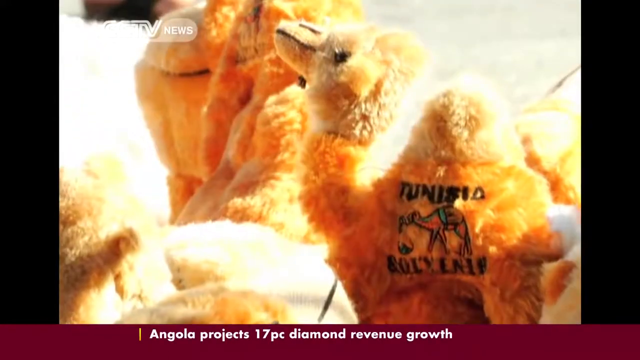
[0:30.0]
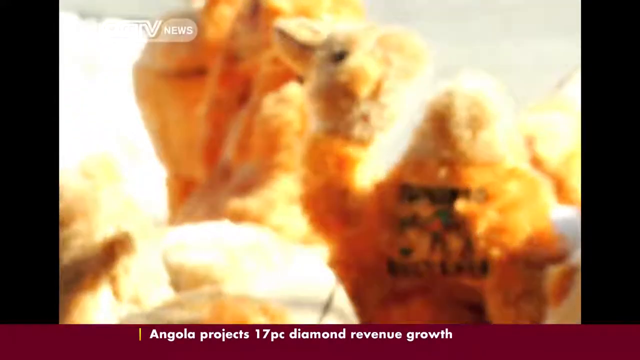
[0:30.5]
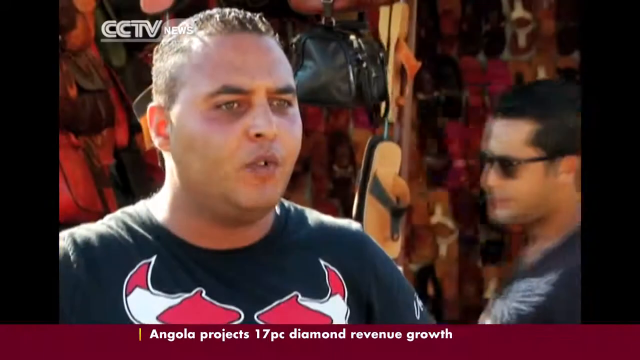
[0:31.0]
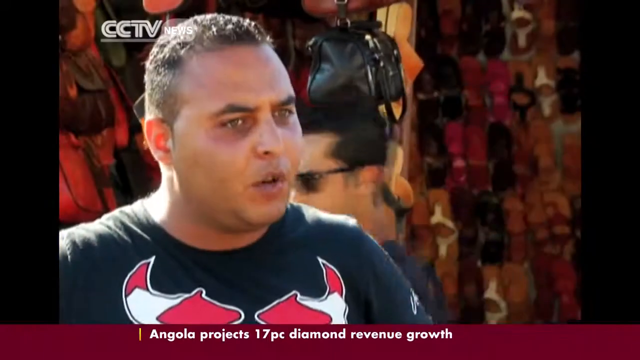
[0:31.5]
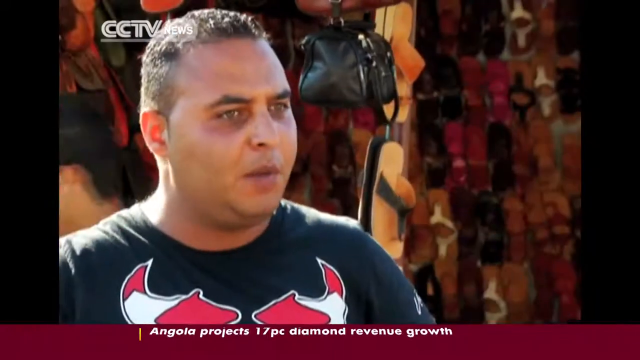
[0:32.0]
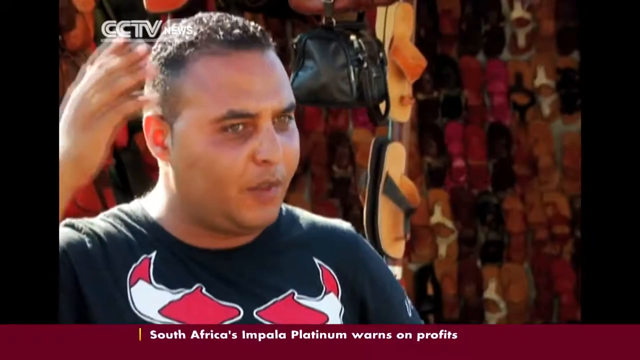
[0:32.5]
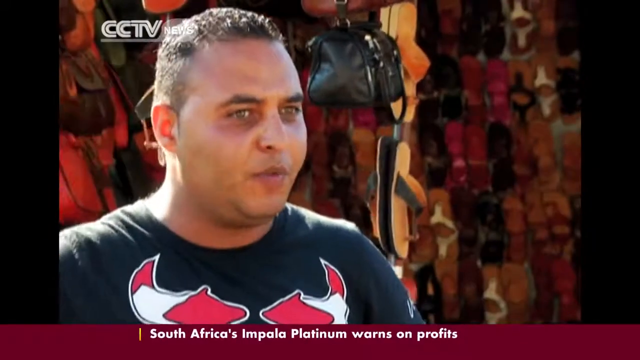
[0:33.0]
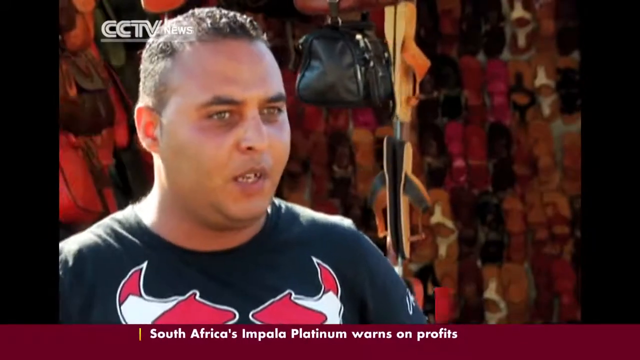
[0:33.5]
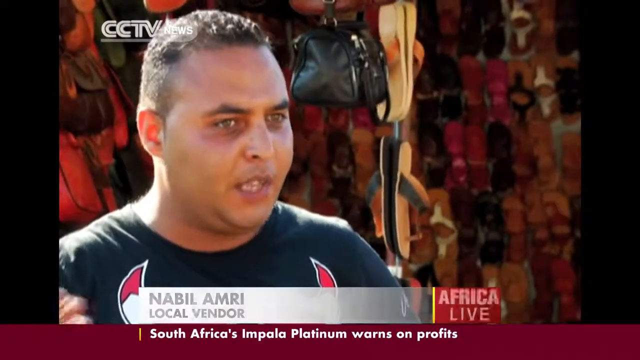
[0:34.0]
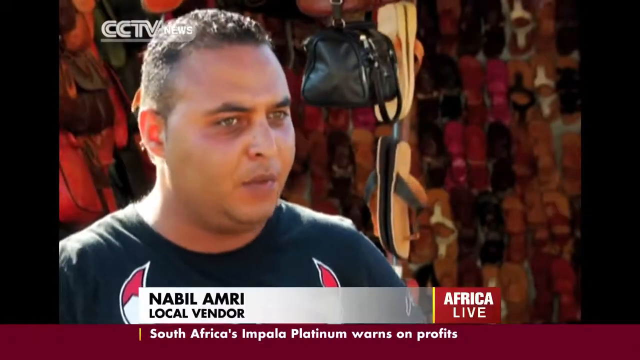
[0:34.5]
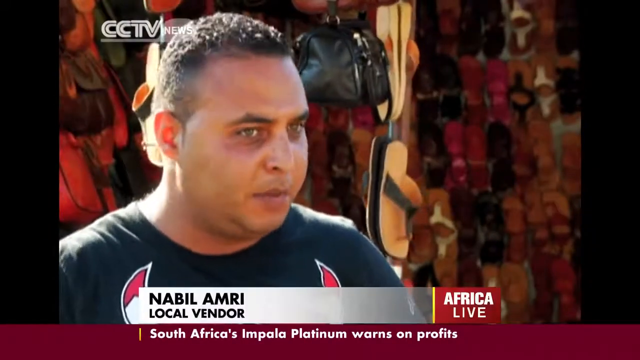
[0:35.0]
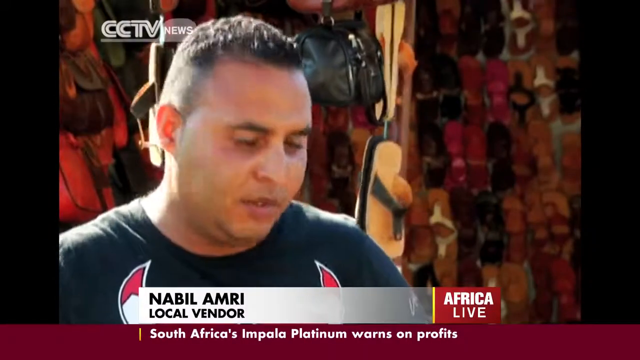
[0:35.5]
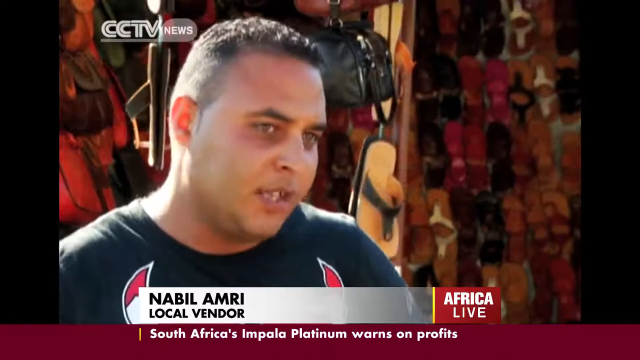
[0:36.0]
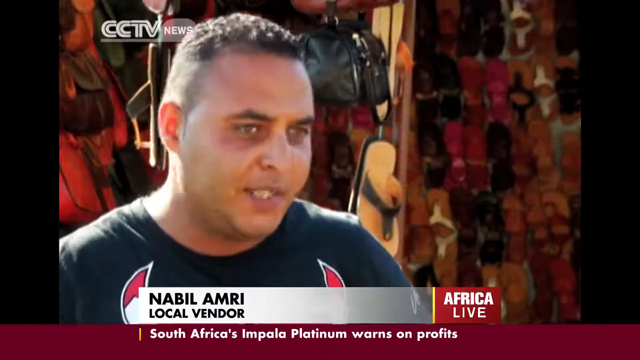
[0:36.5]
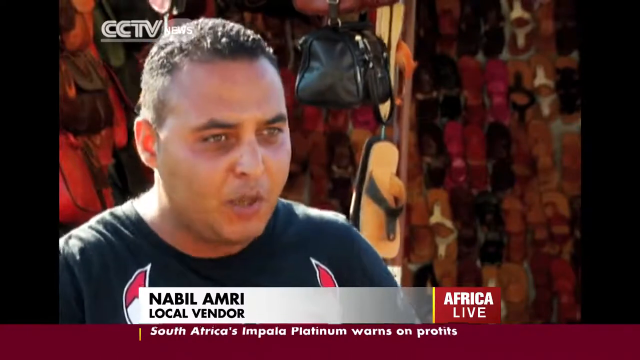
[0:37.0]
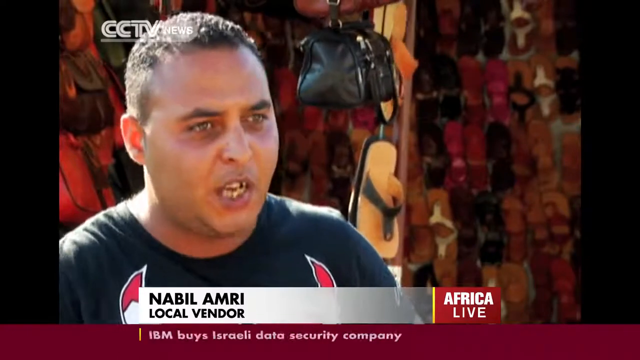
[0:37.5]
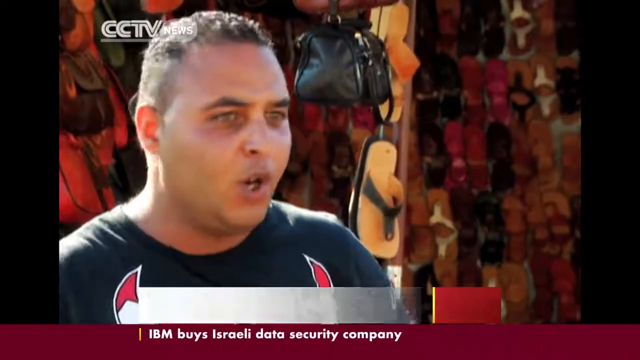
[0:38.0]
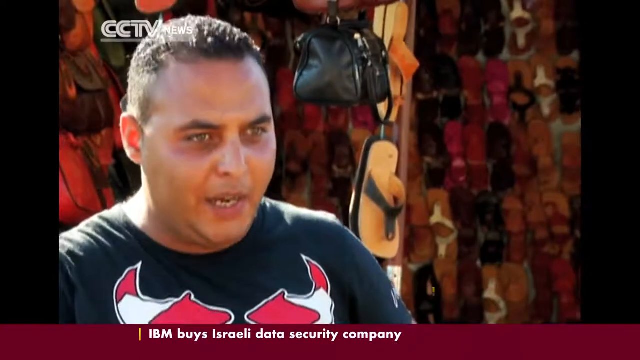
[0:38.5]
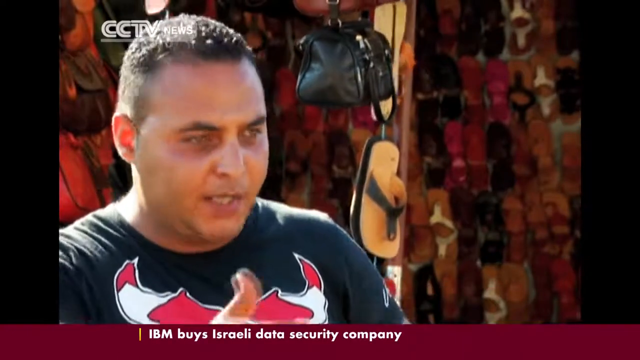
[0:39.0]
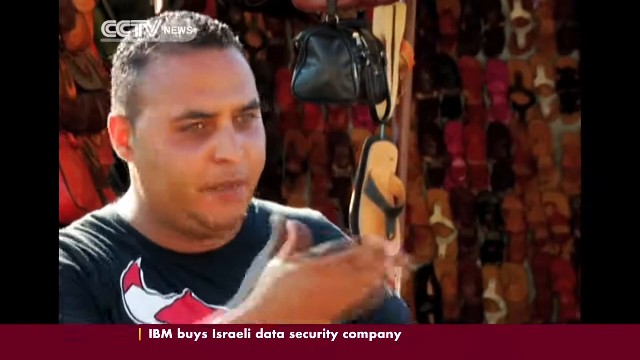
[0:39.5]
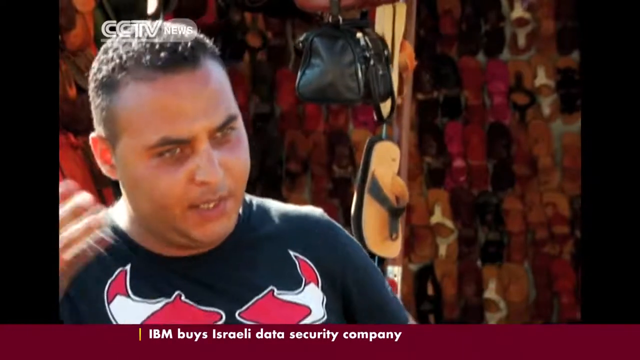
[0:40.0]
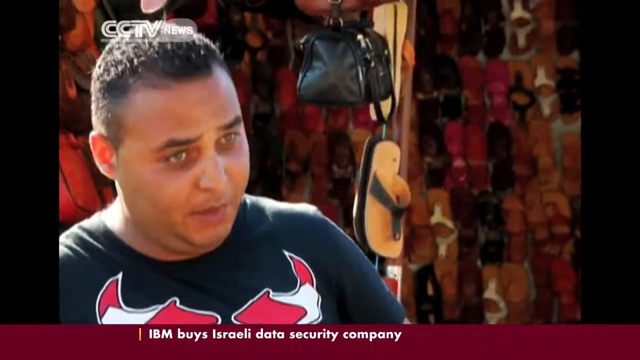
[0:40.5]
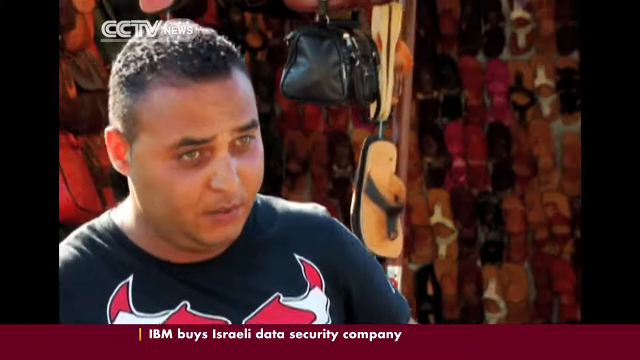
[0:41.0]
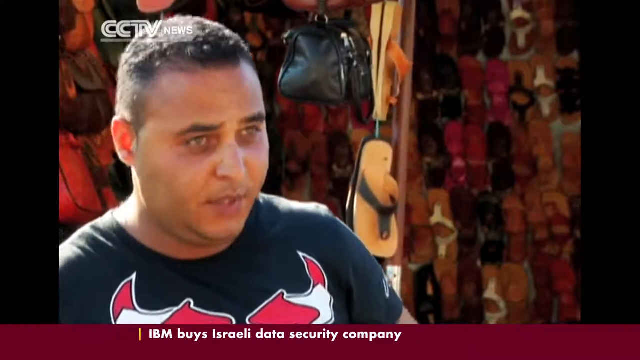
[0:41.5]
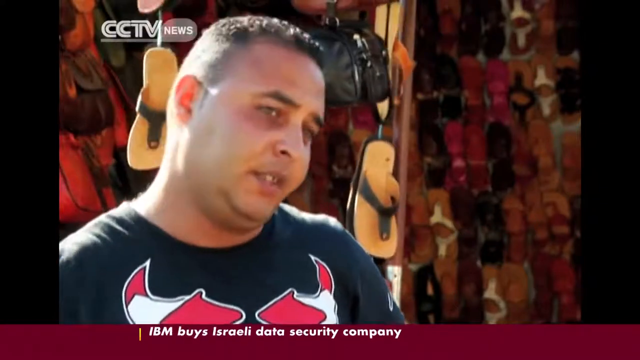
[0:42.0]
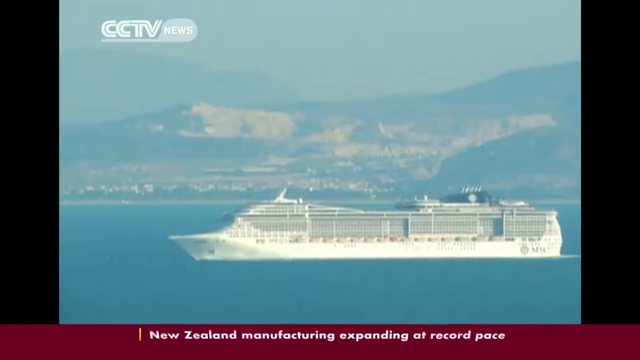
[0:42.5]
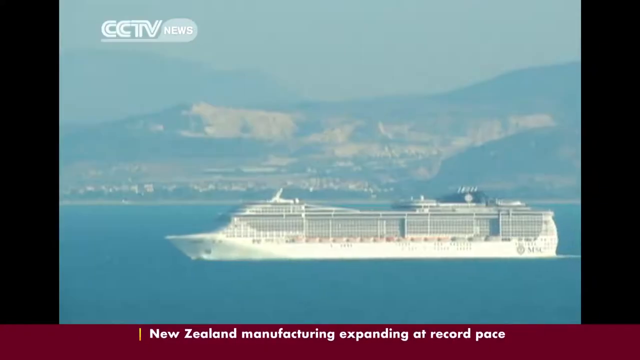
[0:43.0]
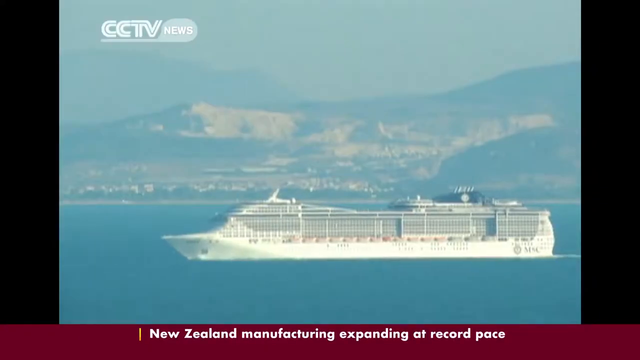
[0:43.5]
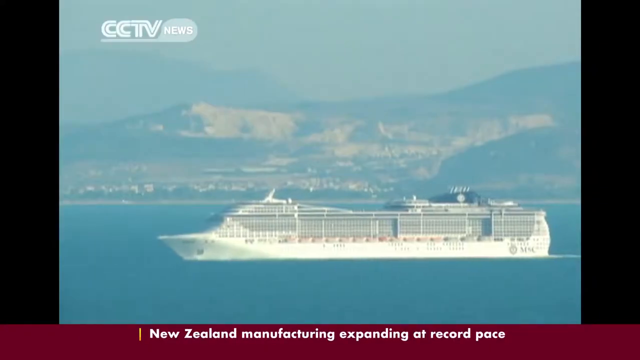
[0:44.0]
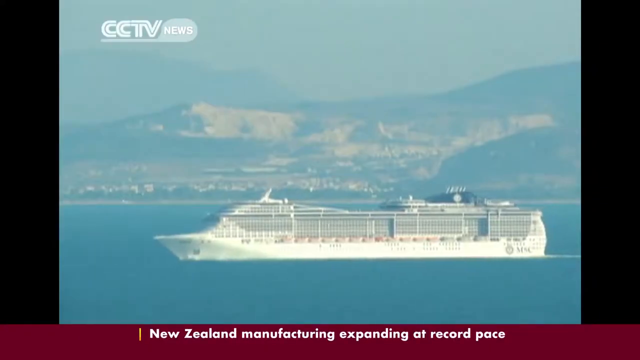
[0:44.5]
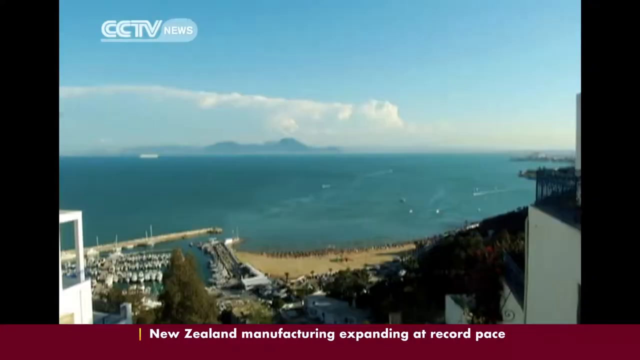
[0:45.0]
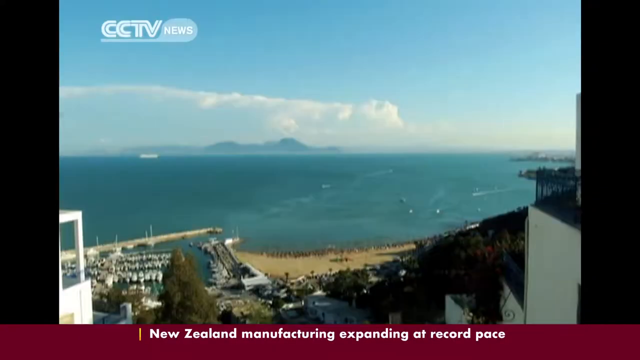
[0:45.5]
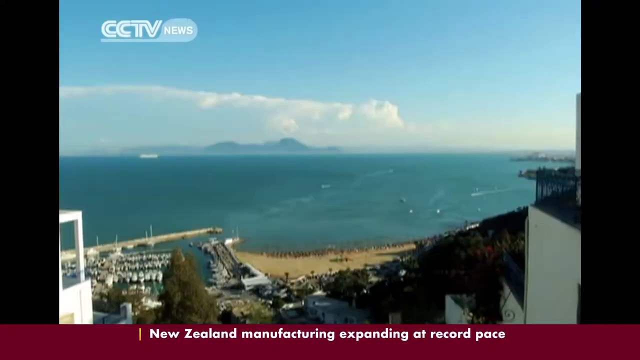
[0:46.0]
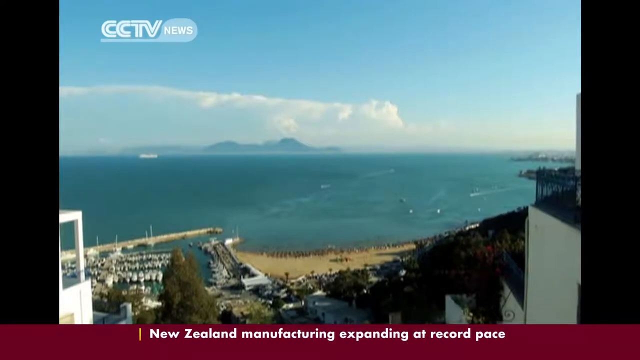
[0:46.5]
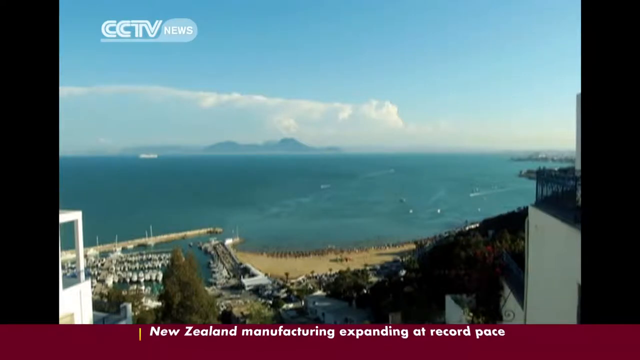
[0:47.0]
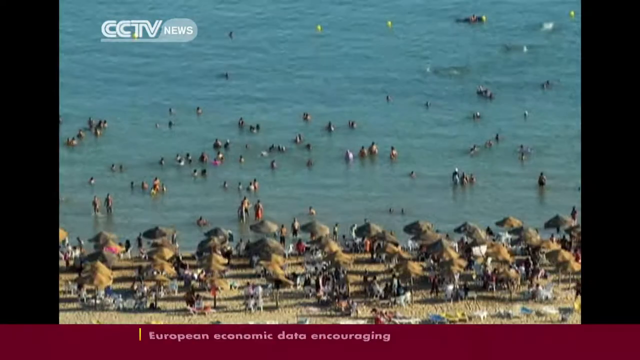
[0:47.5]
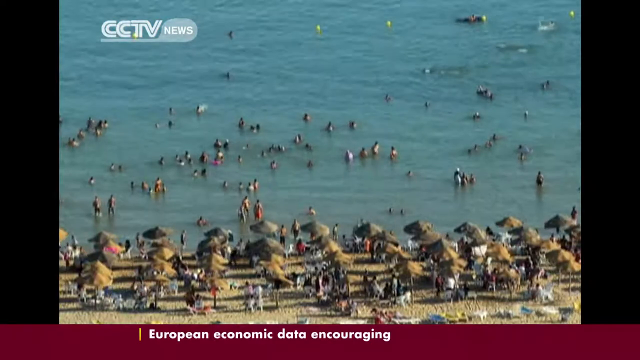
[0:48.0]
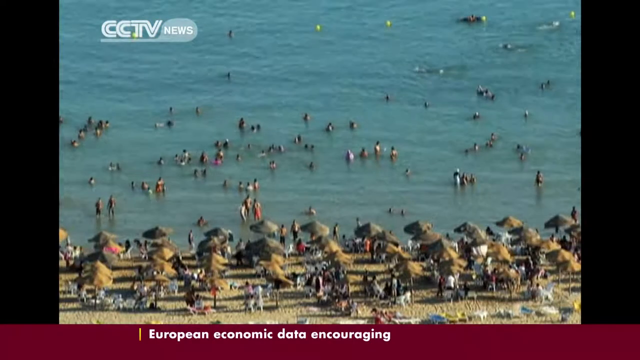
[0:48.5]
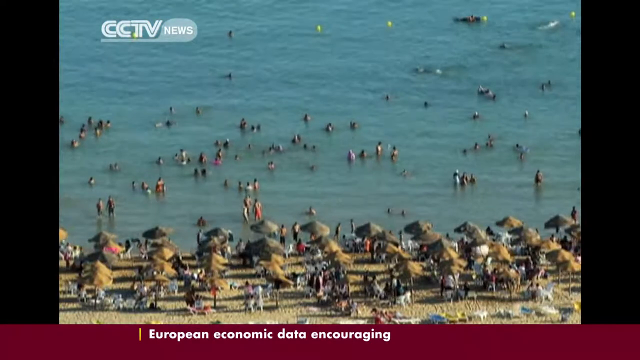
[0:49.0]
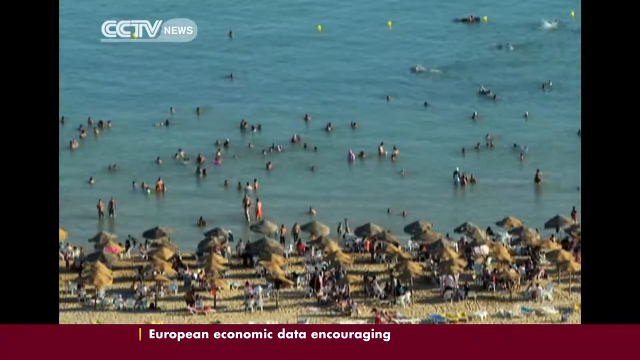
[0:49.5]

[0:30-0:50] The close-up of the cuddly camel toy with "Tunisia" embroidered on its side fades to a static three-quarter angle shot of a man speaking to somebody off camera. He wears a black t-shirt with what looks like a Chicago Bulls basketball team logo. Behind him, sandals, flip-flops and bags hang on display at what looks like a market stall. A lower third identifies him as Nabil Amir, a local vendor, while a ticker scrolls along the bottom with other, unrelated news stories. After he finishes speaking, more shots apparently show the local area: a large white cruise ship moves slowly through the sea off the coast, seen from a long distance away; a view from a balcony overlooks the sea with mountains in the background; and a very busy beach has many umbrellas, people lying on the beach and people swimming in the sea.